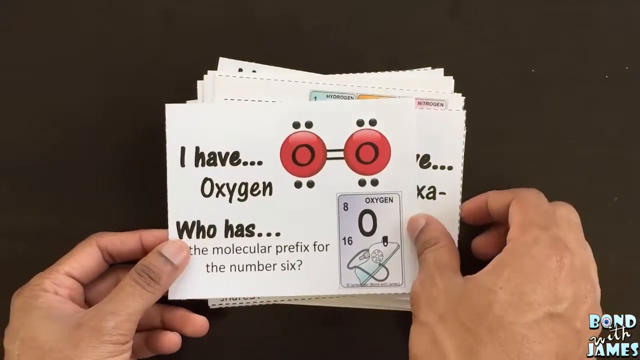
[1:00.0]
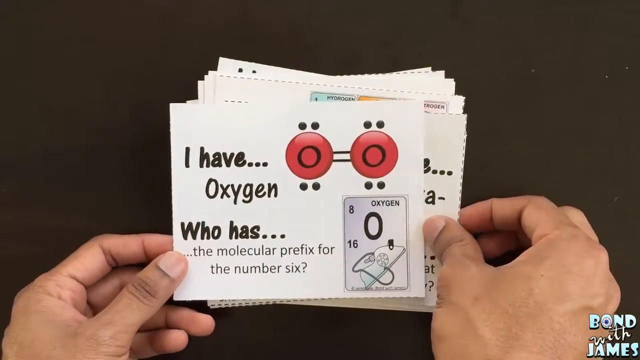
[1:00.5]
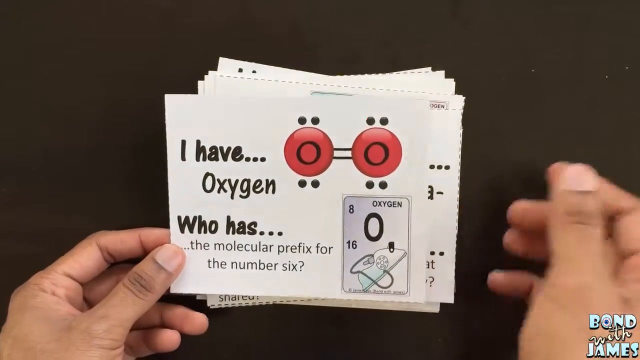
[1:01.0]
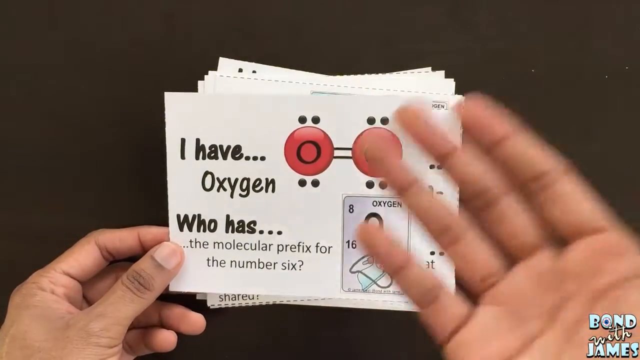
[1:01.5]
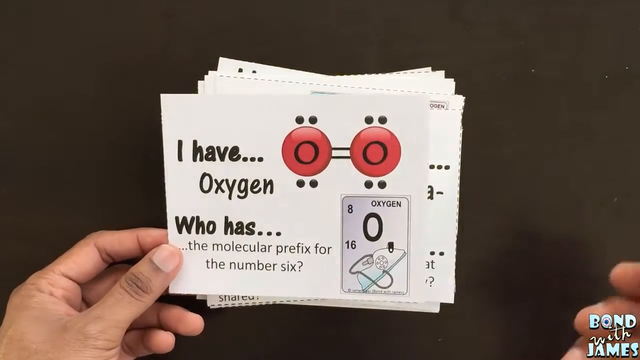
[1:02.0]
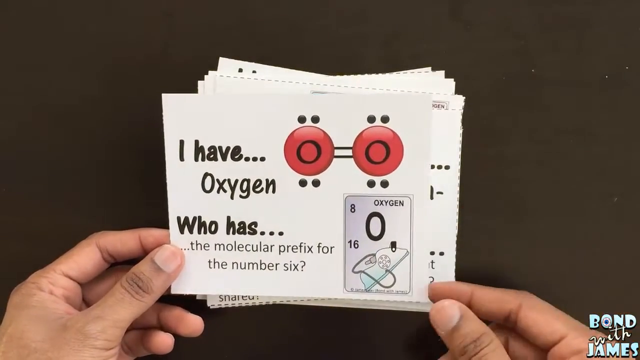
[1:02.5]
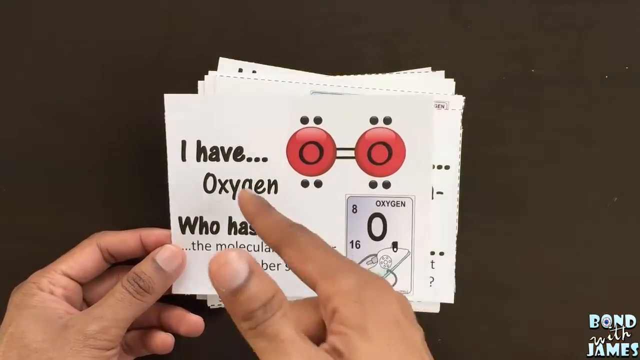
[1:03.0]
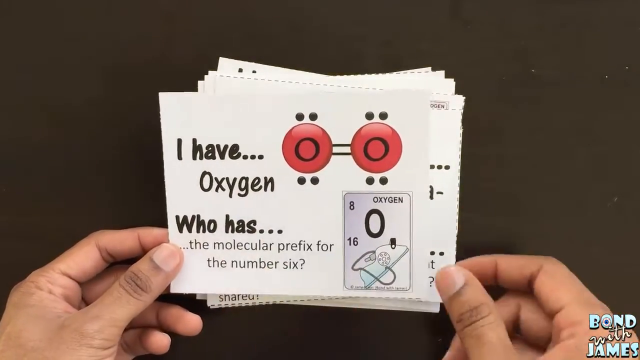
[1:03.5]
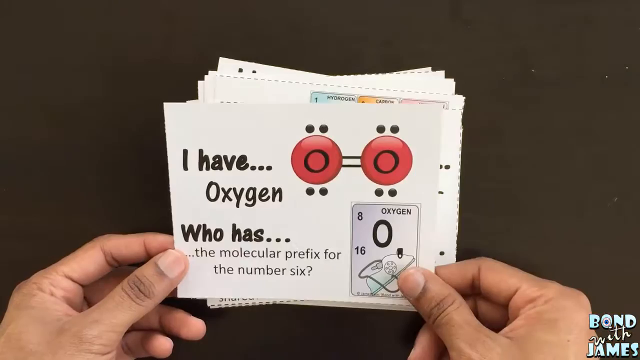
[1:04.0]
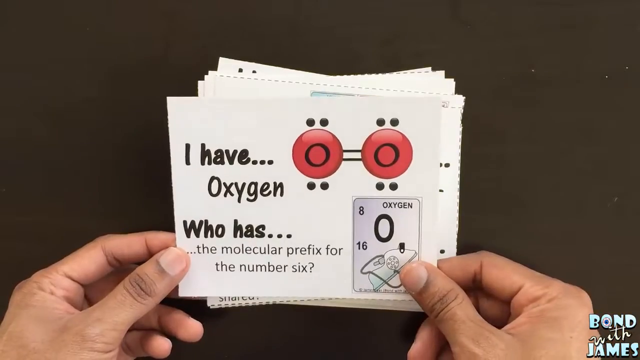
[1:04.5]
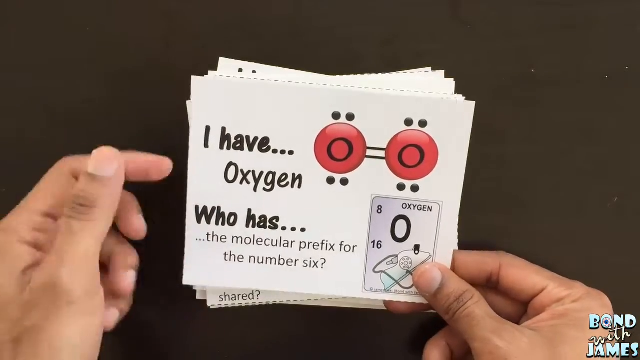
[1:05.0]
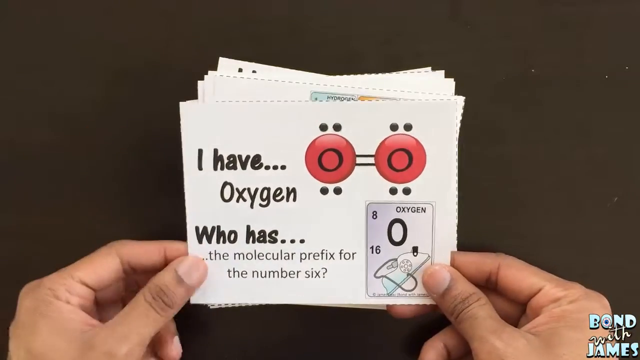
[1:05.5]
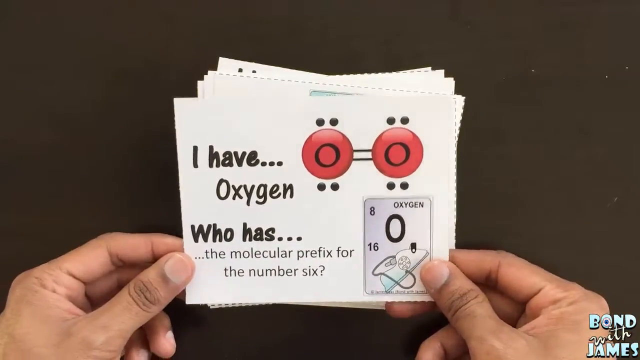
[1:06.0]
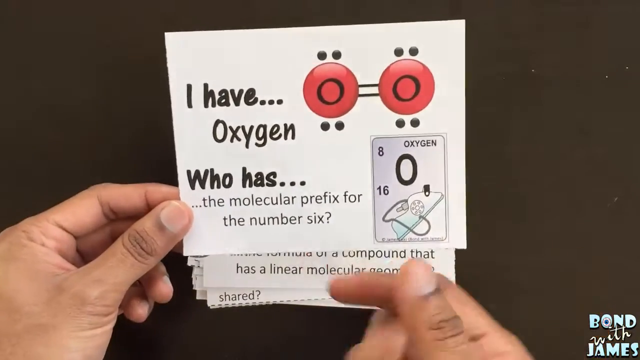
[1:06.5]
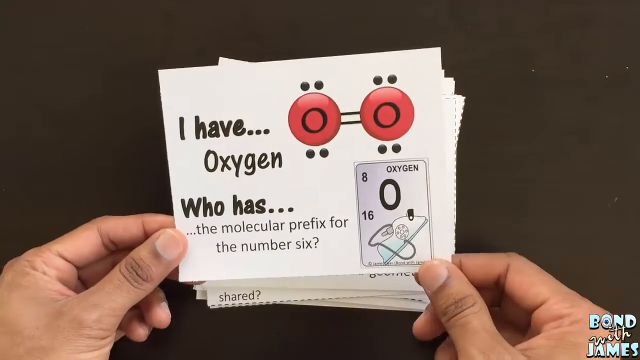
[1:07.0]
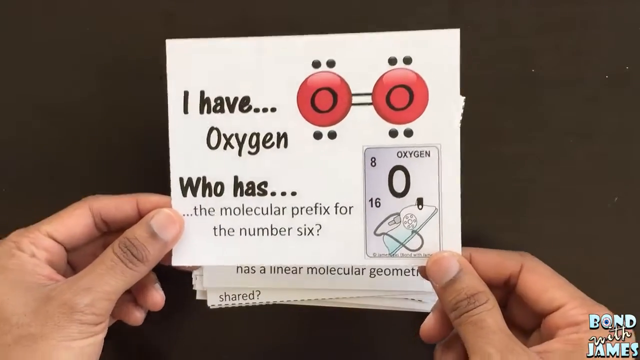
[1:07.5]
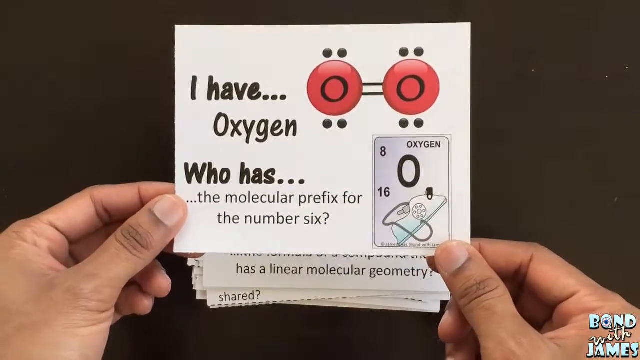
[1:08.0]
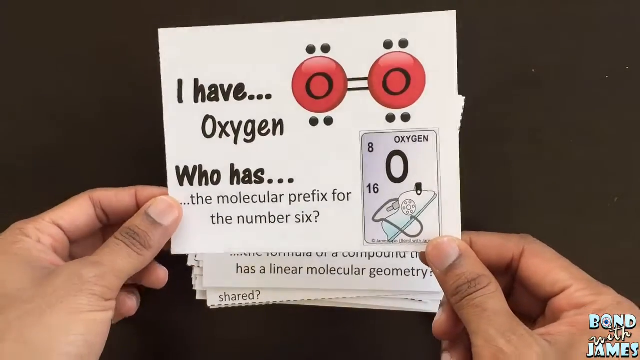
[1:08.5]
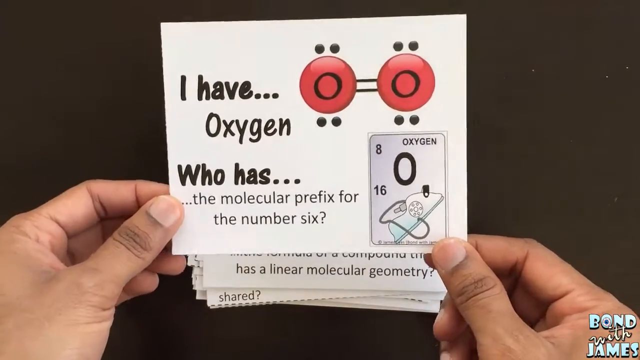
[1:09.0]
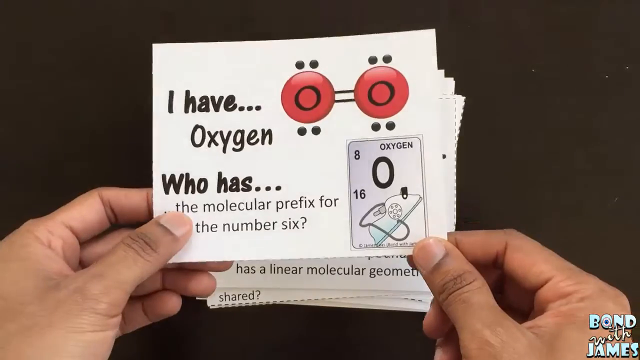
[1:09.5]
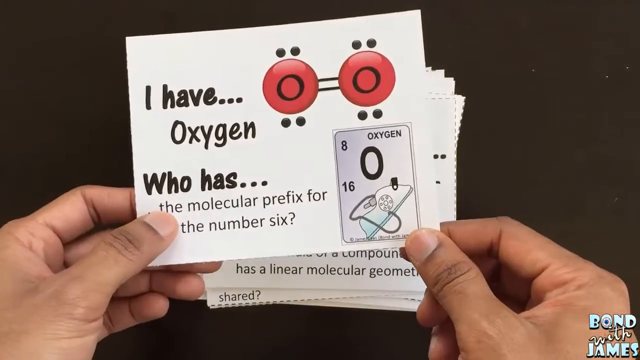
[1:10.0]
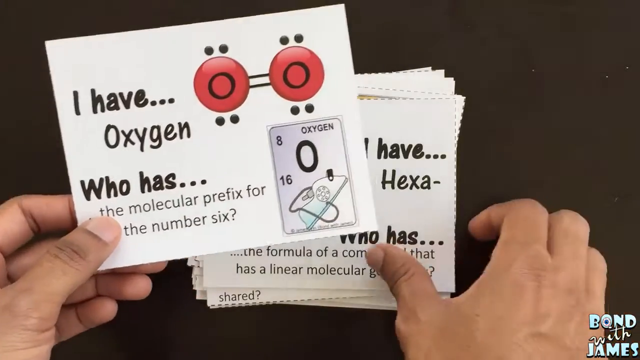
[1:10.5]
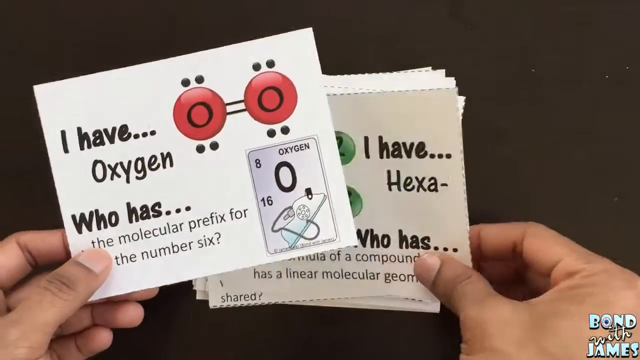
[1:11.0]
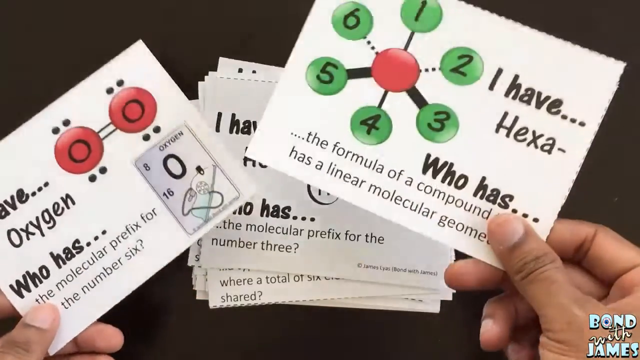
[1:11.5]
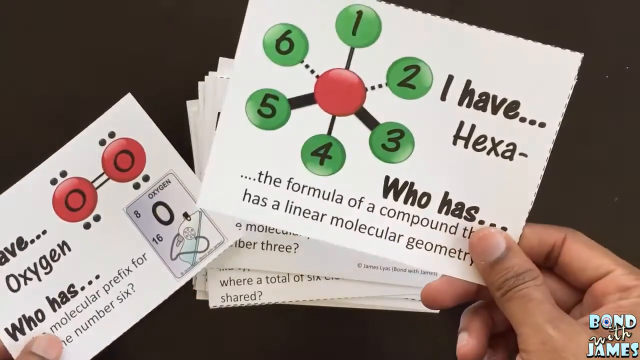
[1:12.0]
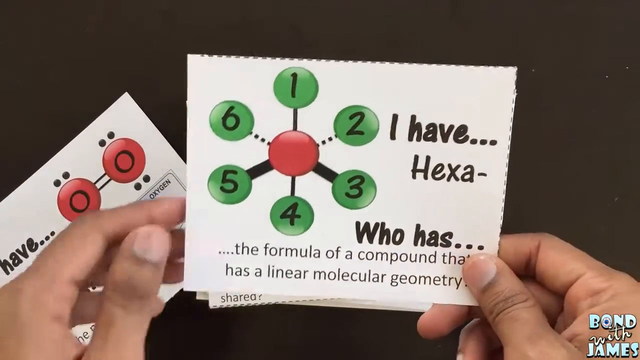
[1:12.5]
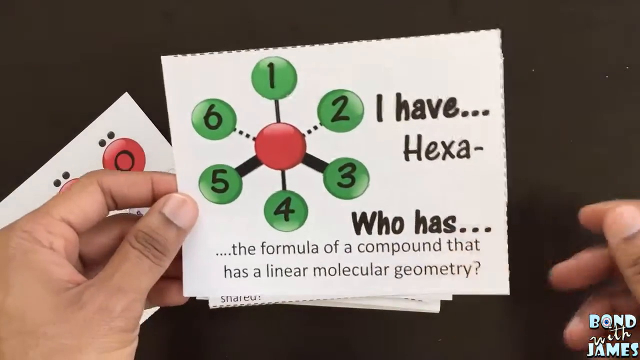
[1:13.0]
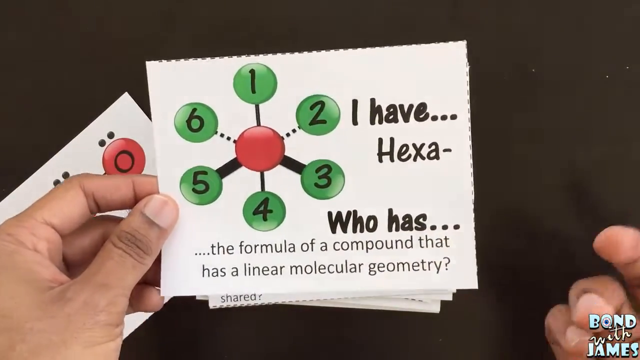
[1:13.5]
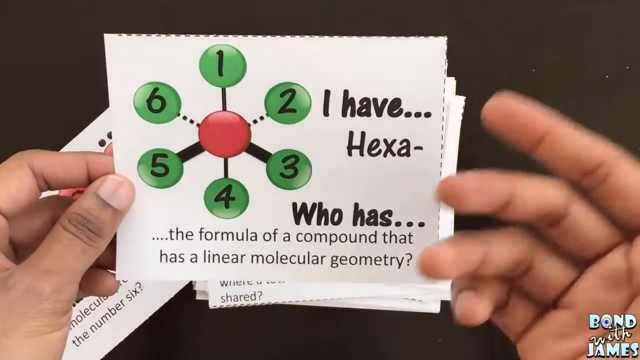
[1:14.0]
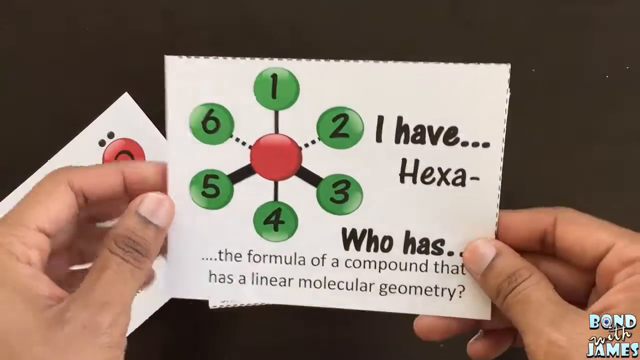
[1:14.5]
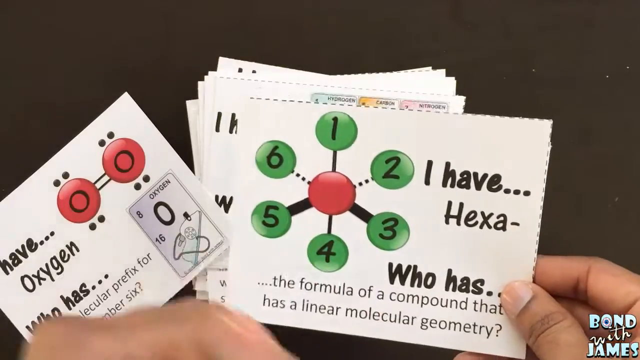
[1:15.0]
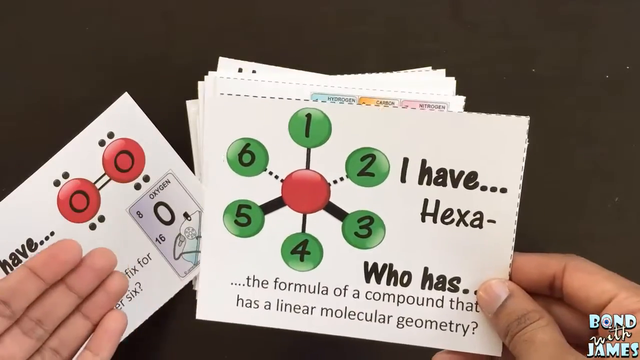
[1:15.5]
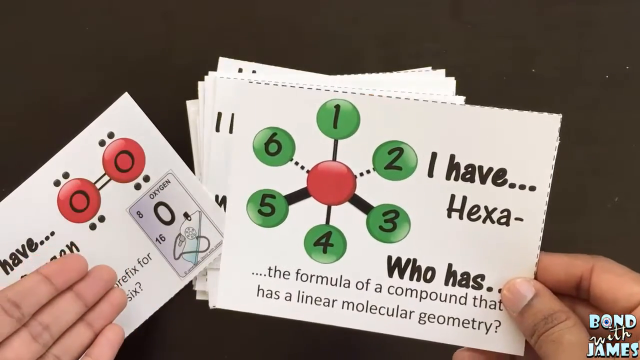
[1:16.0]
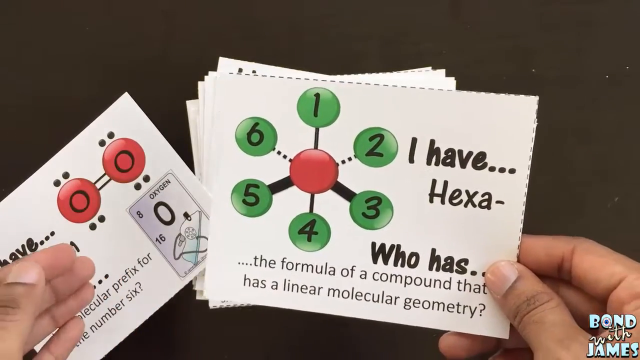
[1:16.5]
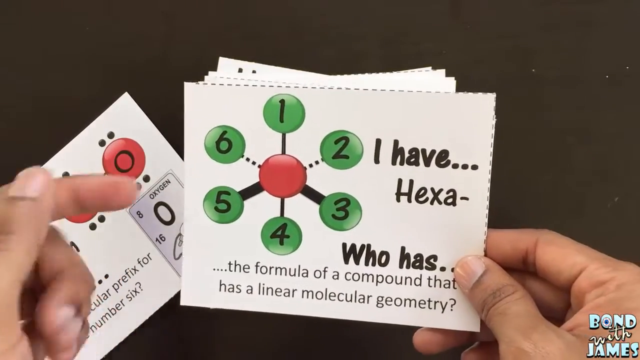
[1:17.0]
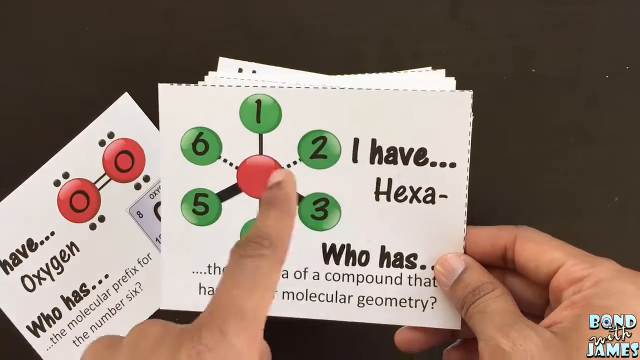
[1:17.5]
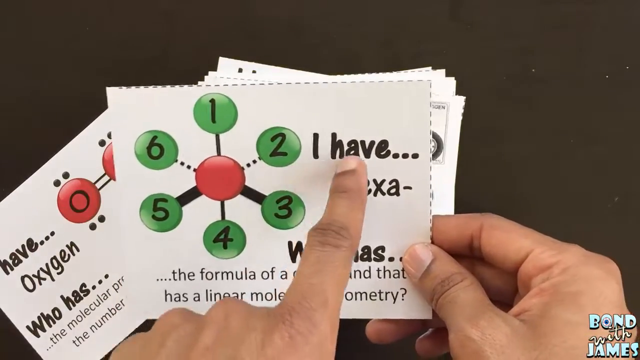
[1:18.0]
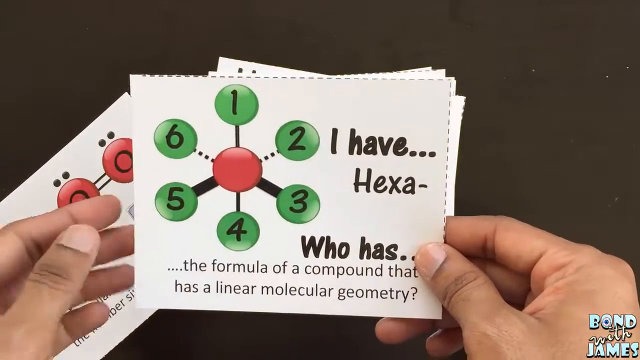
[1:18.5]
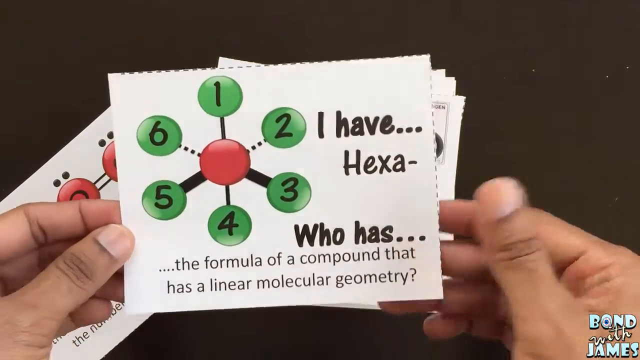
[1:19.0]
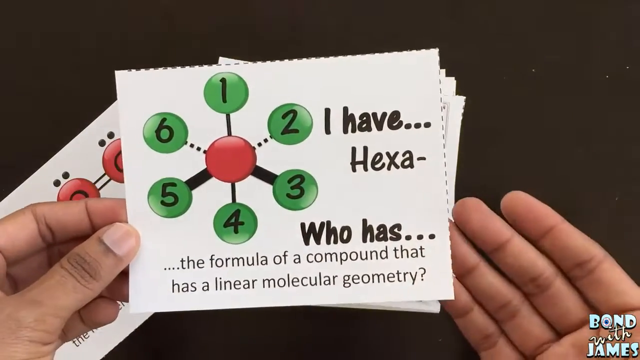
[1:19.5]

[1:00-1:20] A hand holds up a card reading "I have oxygen" and "who has molecular prefix." The card has a white background with two molecular pictures in red and another box inside it with oxygen as a big bold O, surrounded by 8 and 16. The hand makes gestures, the person probably talking about the molecular prefix. The hand then drops this card and picks up the one beneath it. That card also has a white background, with "I have hexa" written boldly on it, and below that, "who has the formula of a compound that has a linear molecular geometry." In the middle is a red circle like a molecule, surrounded by green circles numbered one, two, three, four, five and six. Circles two and six are connected by dotted lines.